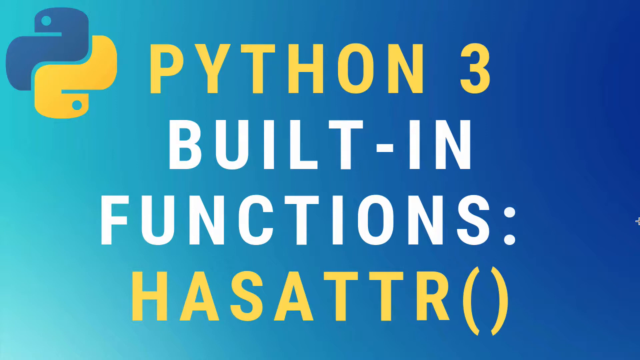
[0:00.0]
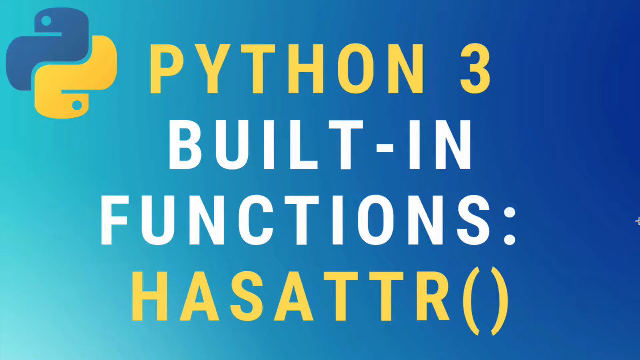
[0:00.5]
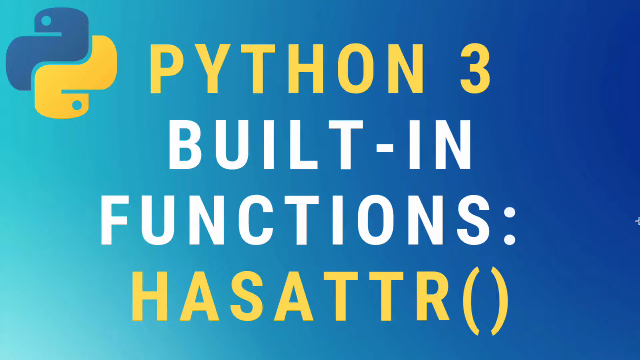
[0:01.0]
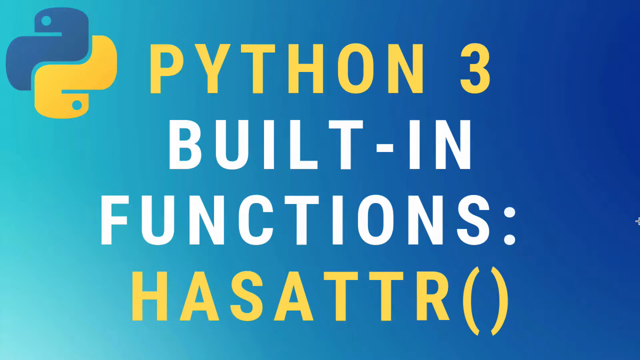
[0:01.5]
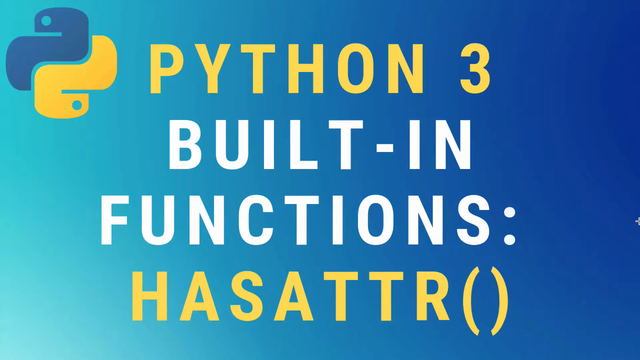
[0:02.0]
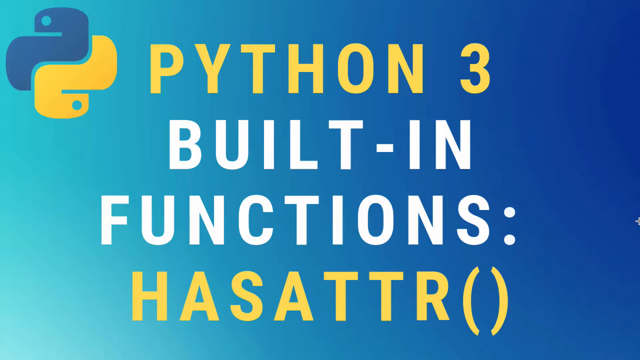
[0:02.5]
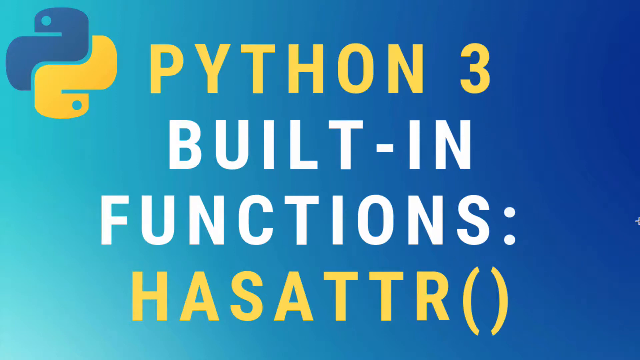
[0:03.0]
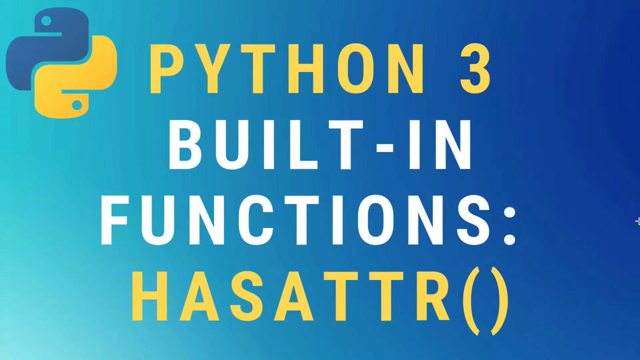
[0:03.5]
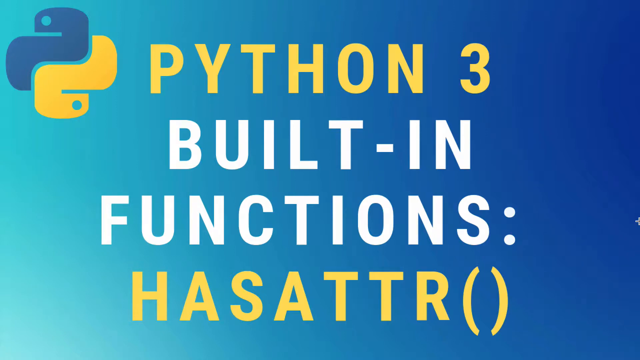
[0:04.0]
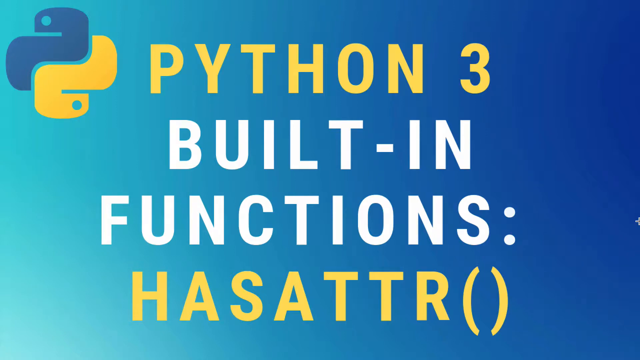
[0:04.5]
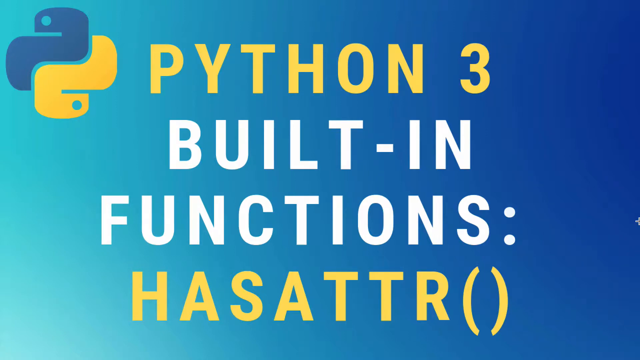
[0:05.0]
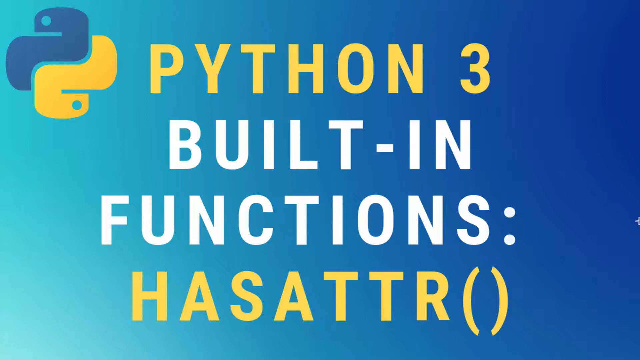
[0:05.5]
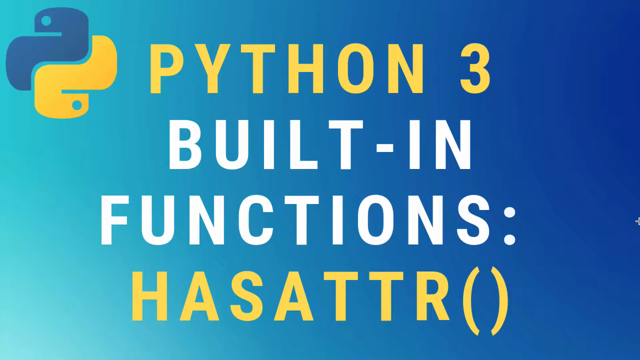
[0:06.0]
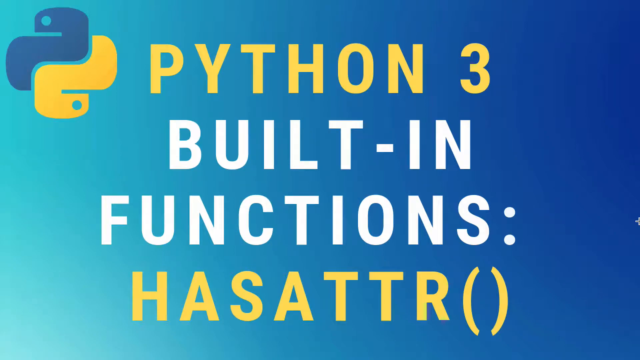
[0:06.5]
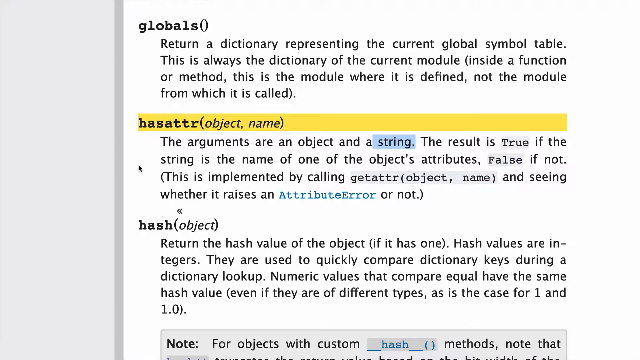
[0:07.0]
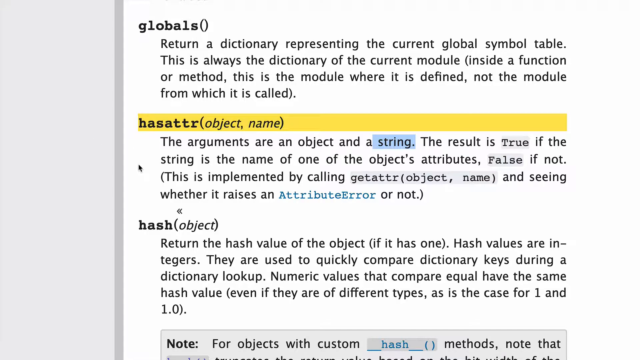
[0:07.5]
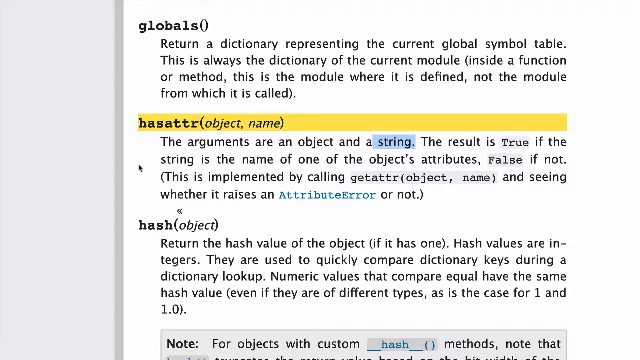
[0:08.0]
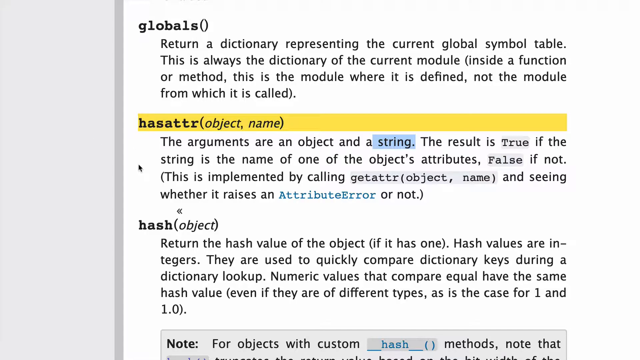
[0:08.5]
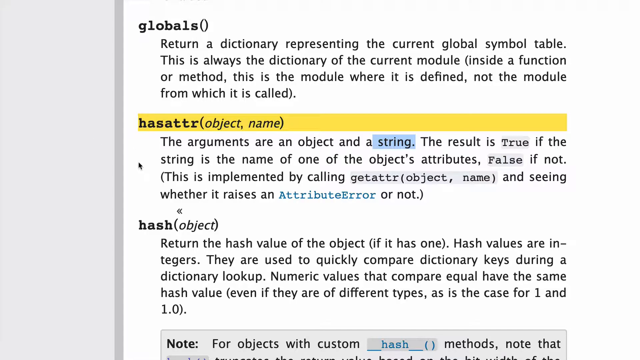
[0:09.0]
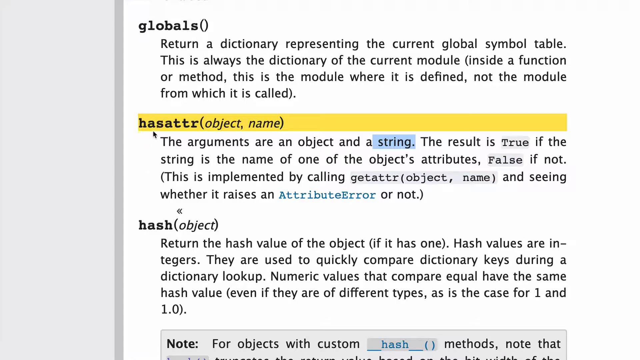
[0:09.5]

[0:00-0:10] A presentation screen has a dark and light blue gradient background with text on top of it. A Python logo is in the top left corner, followed by the text "Python 3" in yellow on the first line, "built-in function" in white on the second and third lines, and "hasattr()" in yellow on the last line. This screen is shown for about six seconds. Next, a clipping of a page from a book appears, with black text on a plain white background. It has three topics, each with a paragraph of explanation below: globals, hasattr and hash. Hasattr is highlighted in yellow, and the mouse hovers around this highlighted portion.